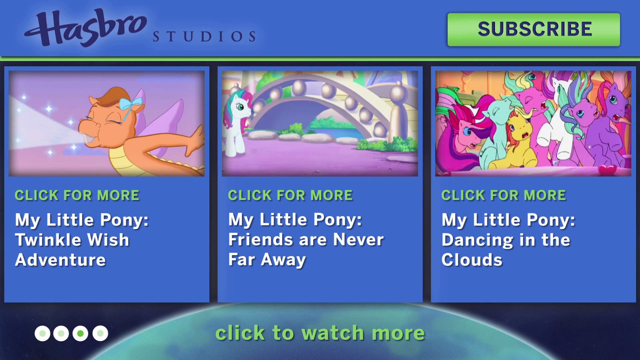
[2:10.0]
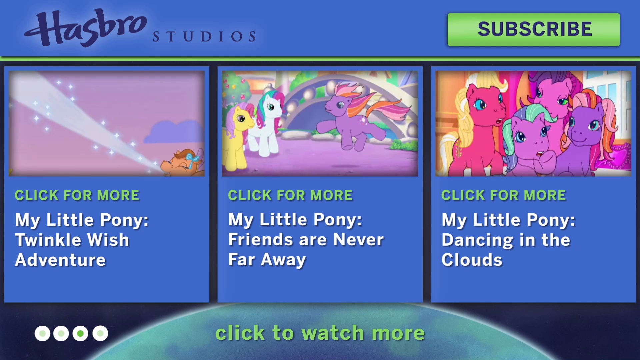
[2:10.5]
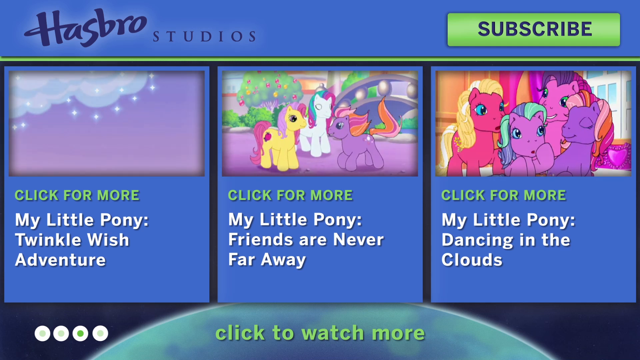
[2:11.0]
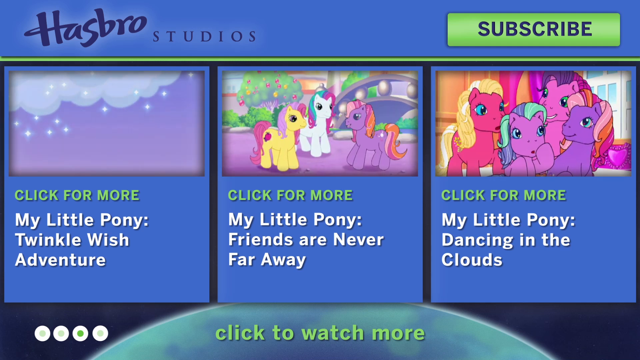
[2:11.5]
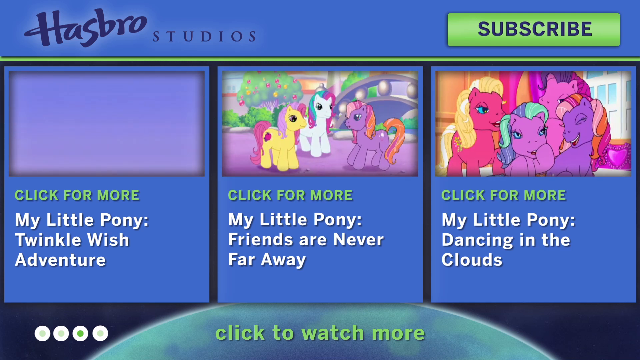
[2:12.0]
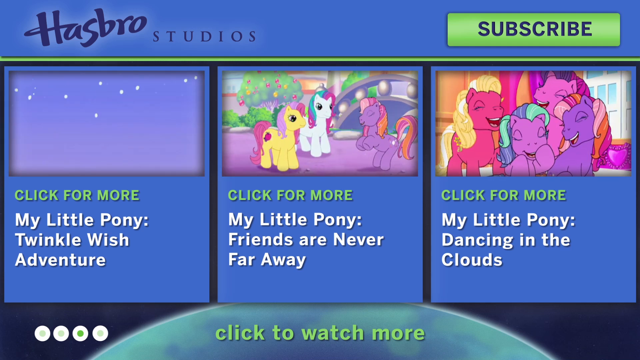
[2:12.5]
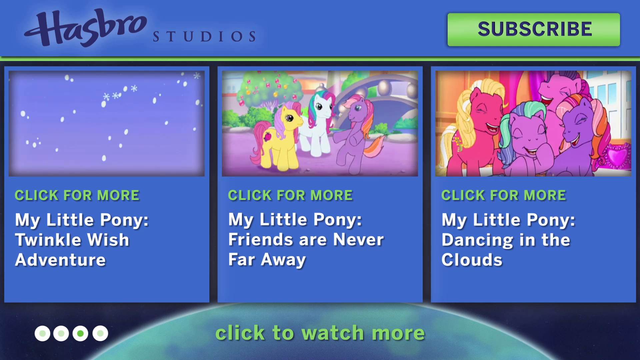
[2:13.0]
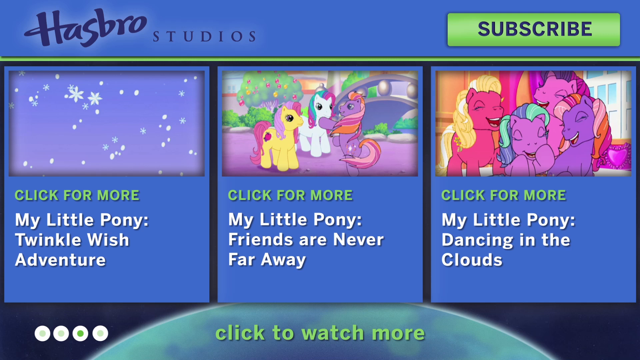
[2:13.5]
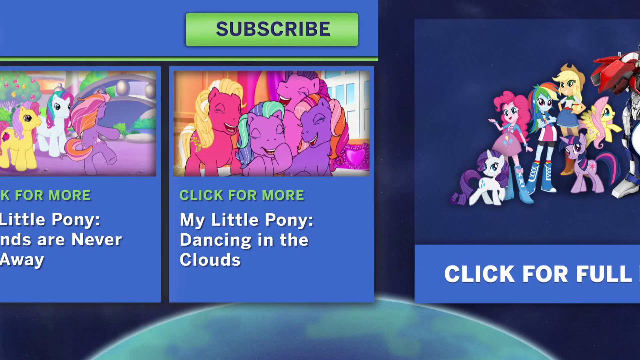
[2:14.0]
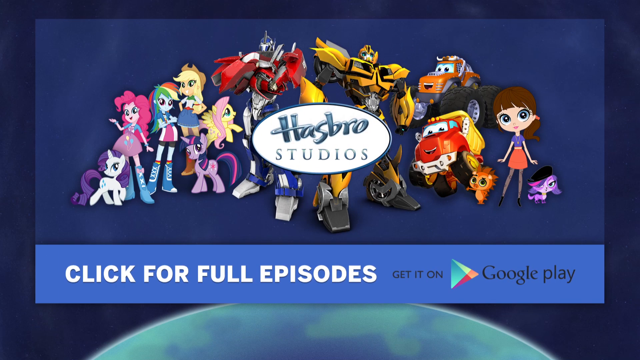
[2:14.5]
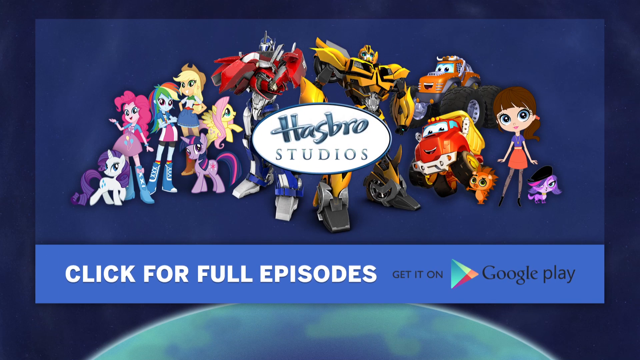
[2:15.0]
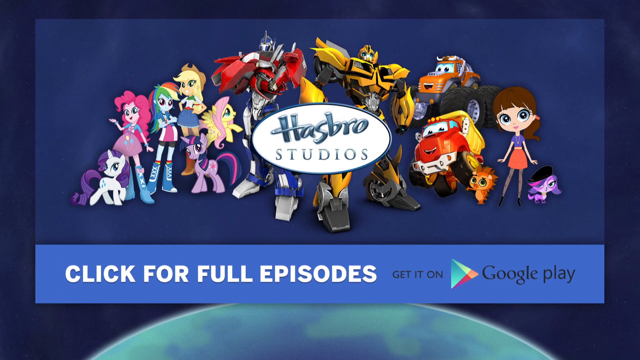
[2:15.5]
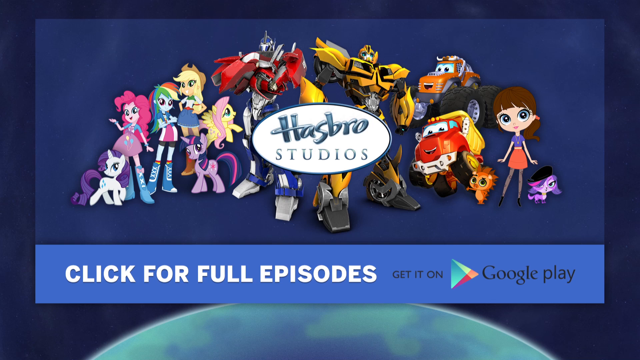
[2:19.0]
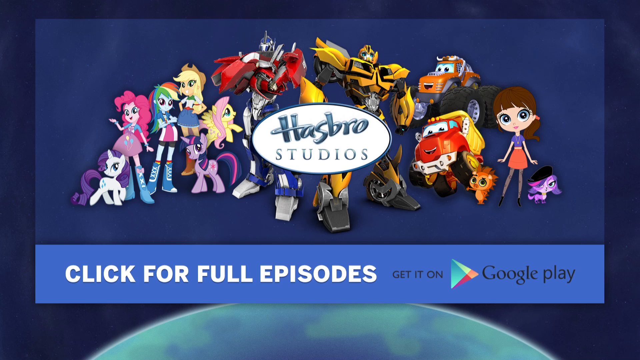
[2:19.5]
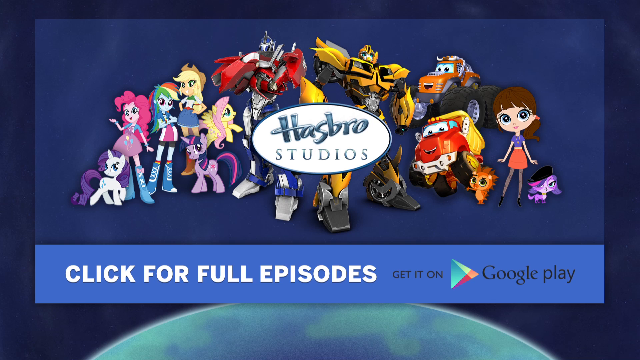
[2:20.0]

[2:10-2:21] Text reads "Click for more" alongside My Little Pony lines, including "my little pony friends are never far away" and "my little pony dancing in the clouds". The first frame shows just clouds and stars. The second shows three unicorns, one purple, one yellow and one white, with a background like a bridge, branches, and a green tree with red and yellow fruits. The third frame shows four unicorns, two purple, one reddish and one purplish, in a house with a window showing blue sky, a brown wall and curtains; they laugh and dance. Then "Habro Studios" appears, with unicorns, transformers and cars, and the text "Click for more for full episodes" and "Get it on Google Play". The background is blue and the words are written in white.